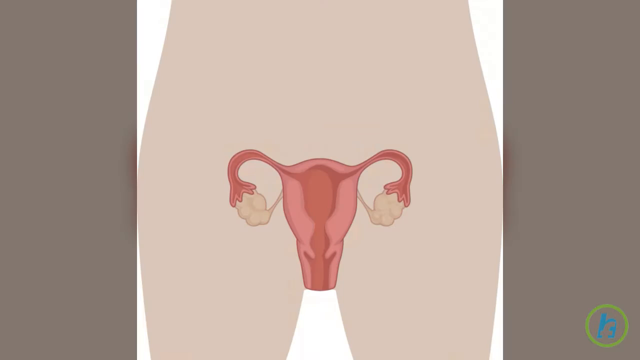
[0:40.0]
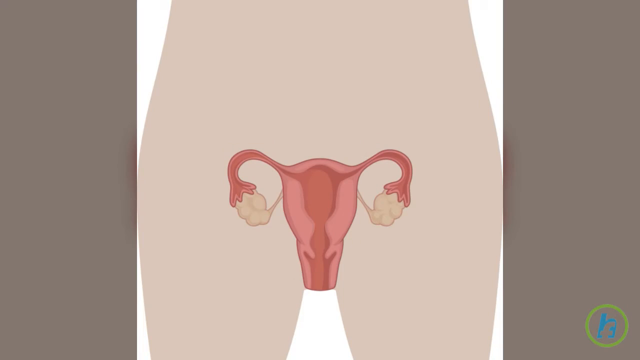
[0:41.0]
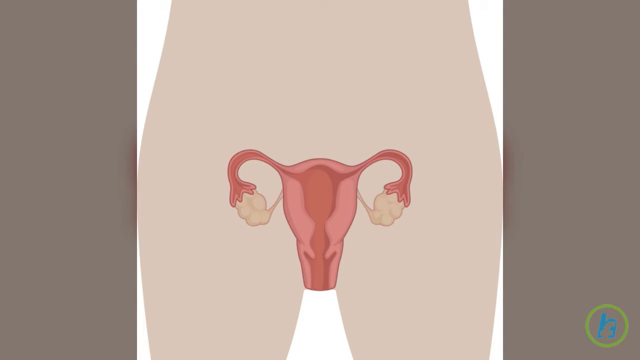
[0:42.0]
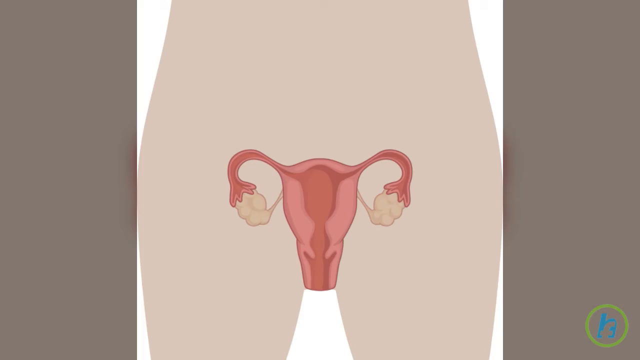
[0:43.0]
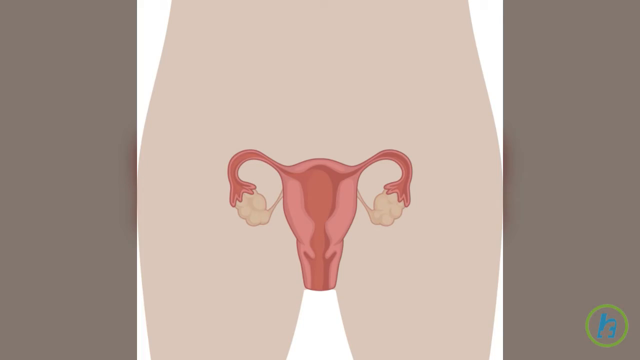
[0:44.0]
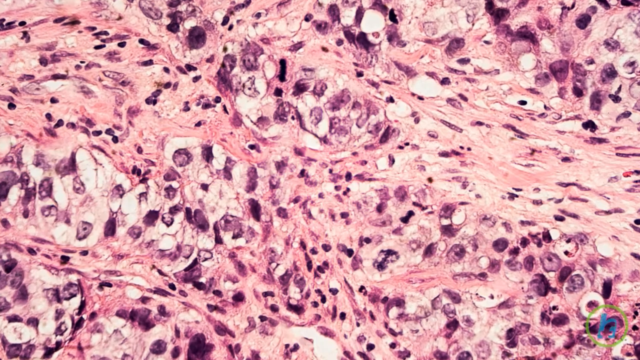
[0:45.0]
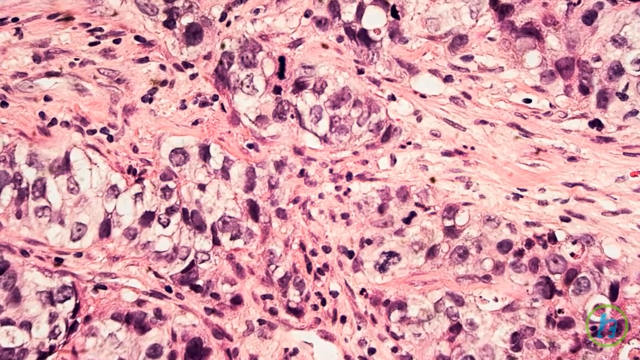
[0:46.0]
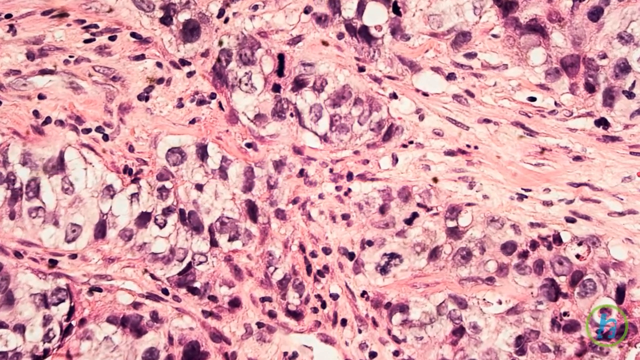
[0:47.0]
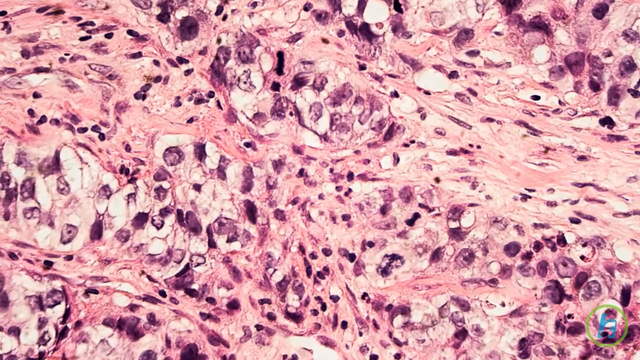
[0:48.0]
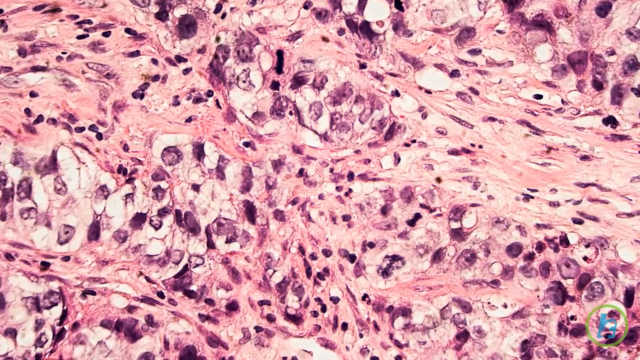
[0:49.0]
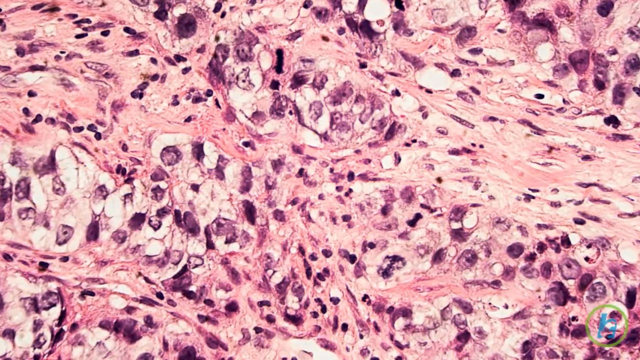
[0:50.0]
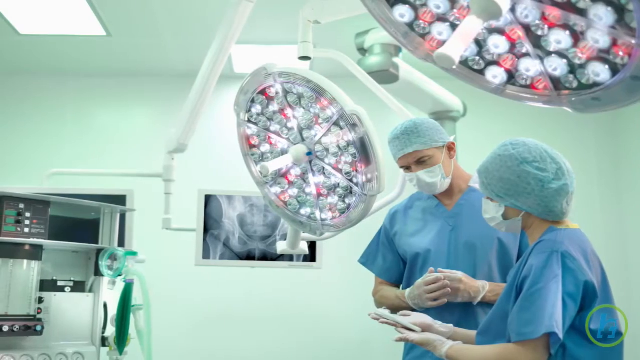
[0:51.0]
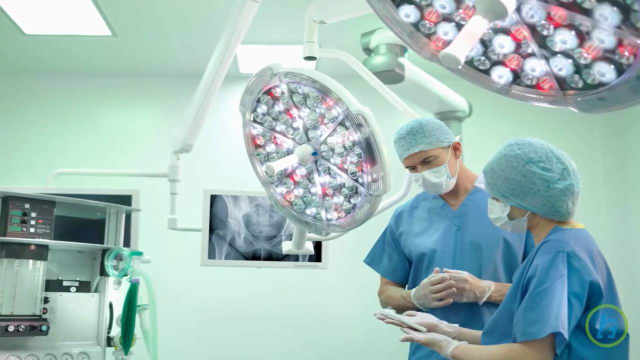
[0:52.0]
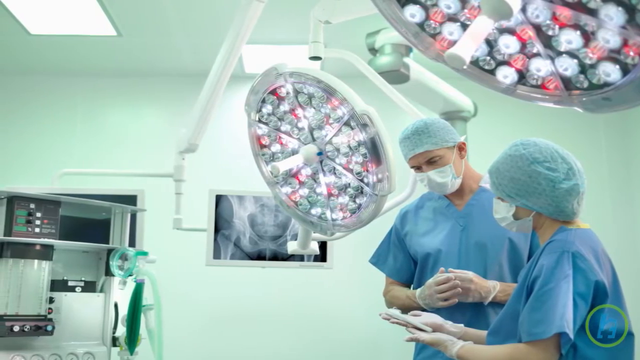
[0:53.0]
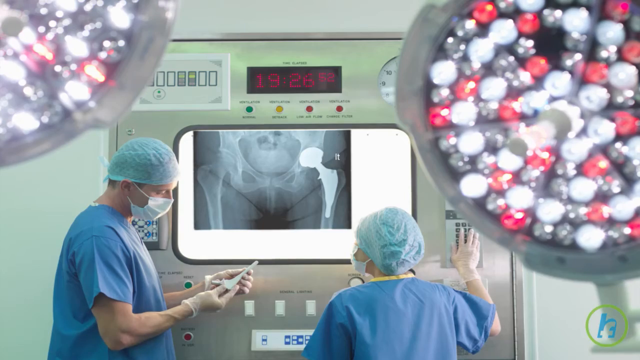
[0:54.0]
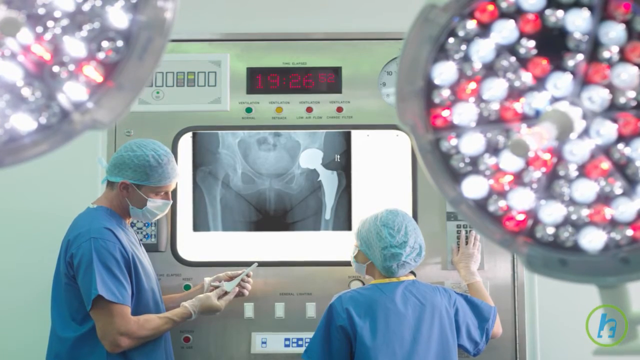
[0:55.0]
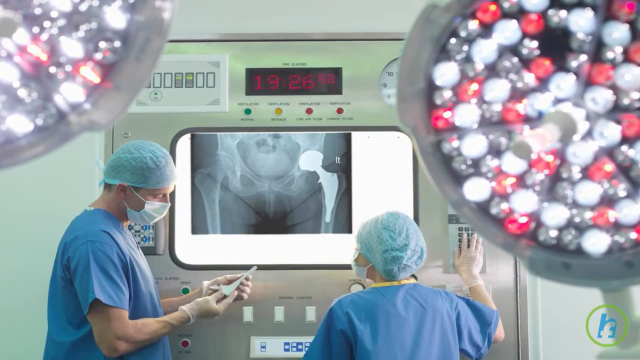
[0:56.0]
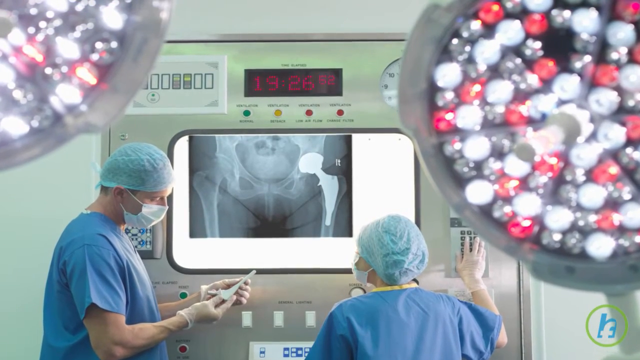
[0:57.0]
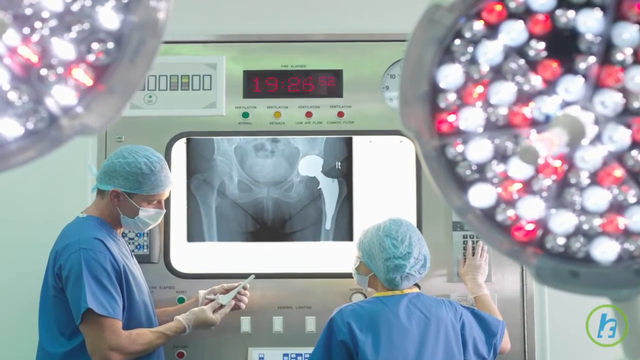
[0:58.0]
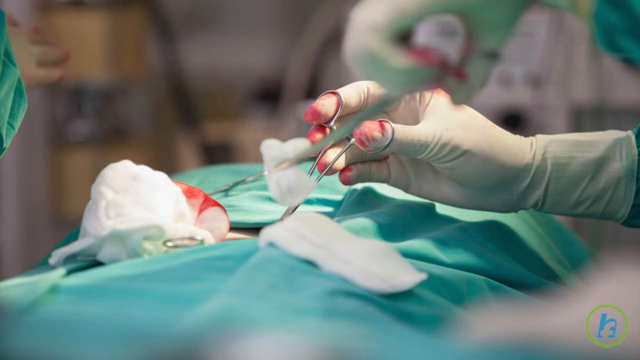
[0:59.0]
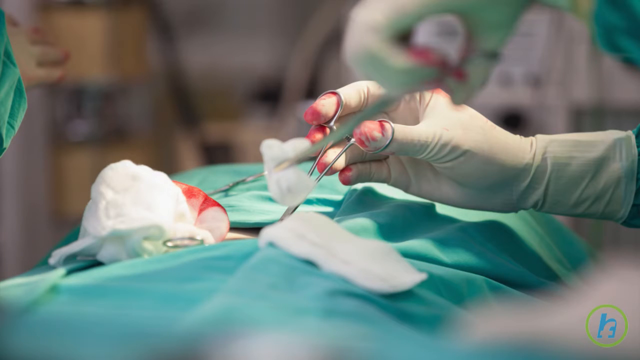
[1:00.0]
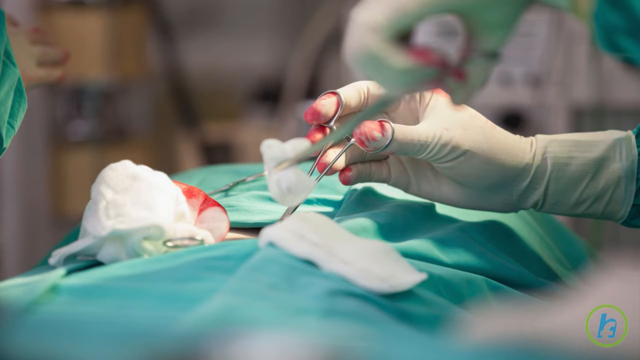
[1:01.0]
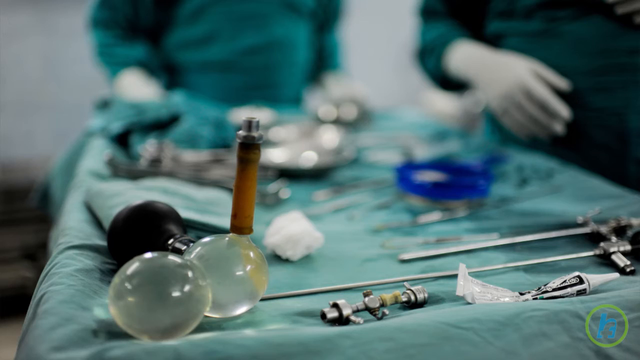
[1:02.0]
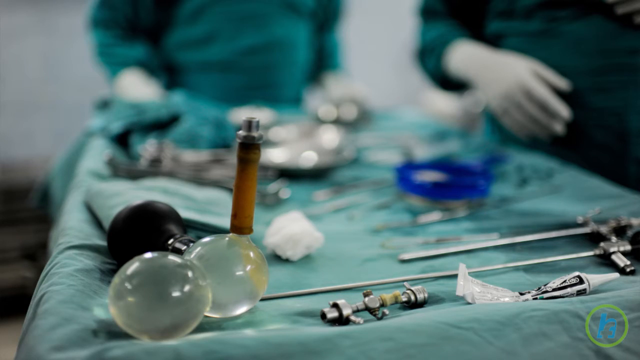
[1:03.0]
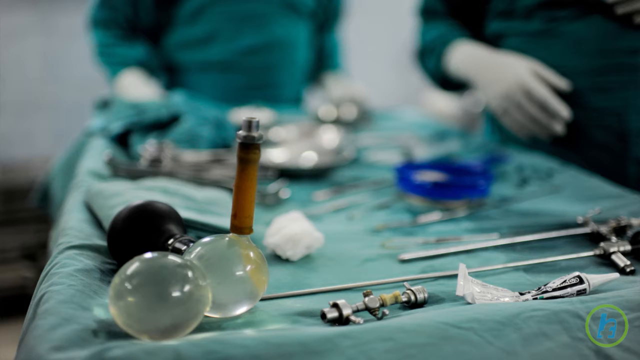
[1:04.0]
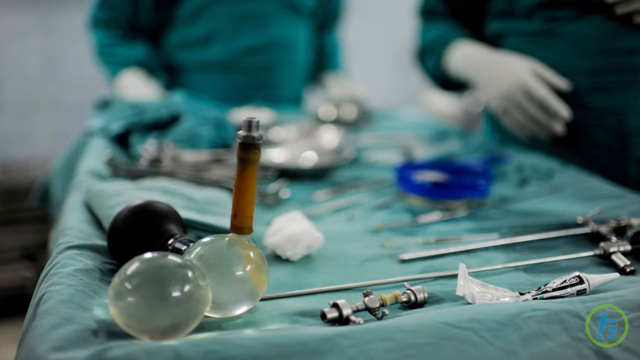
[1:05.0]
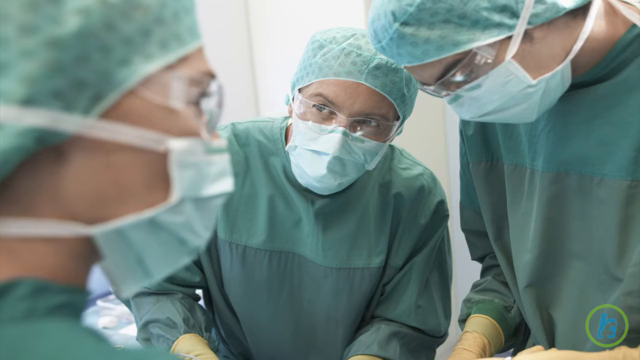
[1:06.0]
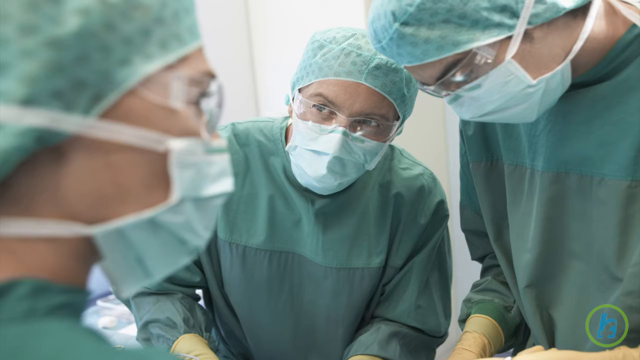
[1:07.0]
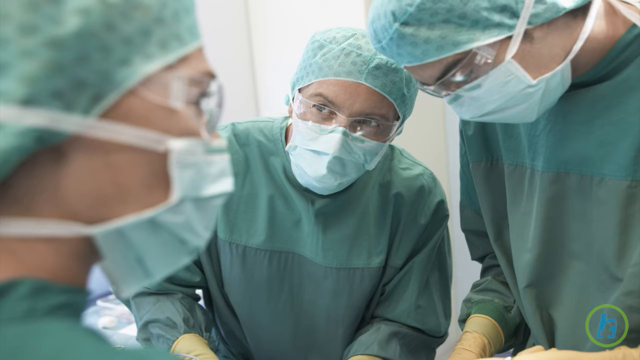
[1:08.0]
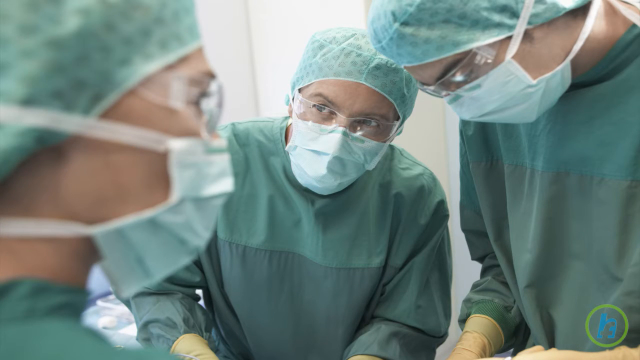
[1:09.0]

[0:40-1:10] Another image shows the bottom part of the urethra and exactly where it is located in relation to the human body, connected to the pelvis. There is a silhouette of the human body in a kind of light brownish color, showing where it is located especially in relation to the legs; it goes in sort of a V-shape where the legs are spread apart. Next come more of the purple molecules in a different picture that is more pink. Then there is a picture of scientists standing, looking at various things such as bone structure in this area, and a picture of them working on someone, holding bloody scissors and possibly cutting the person open for an early-stage birth.